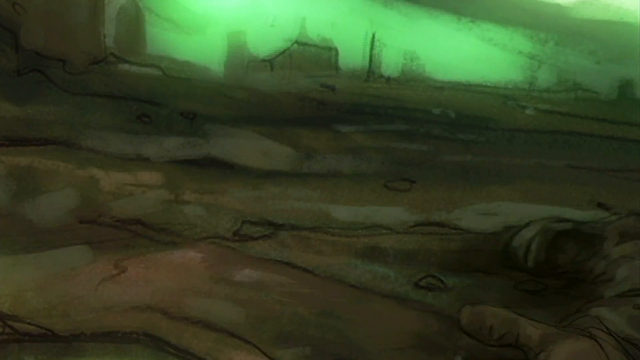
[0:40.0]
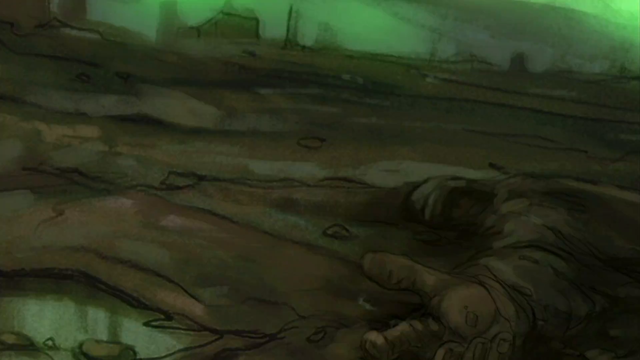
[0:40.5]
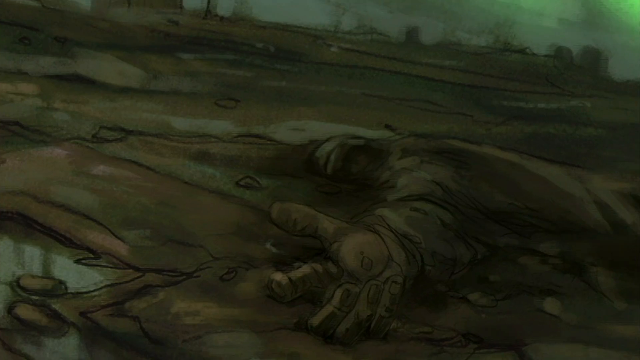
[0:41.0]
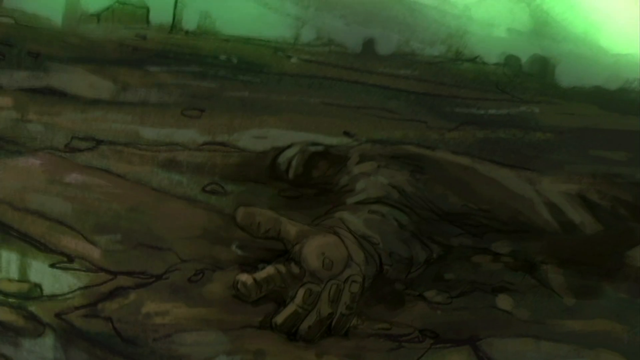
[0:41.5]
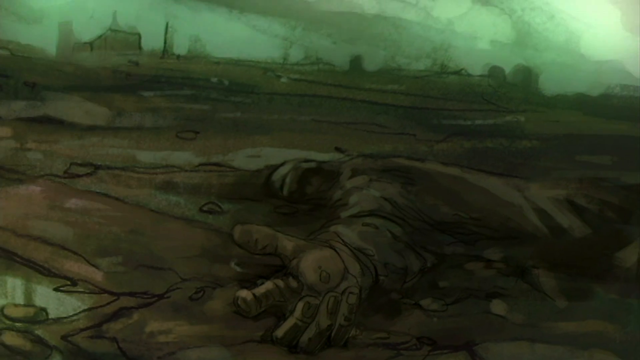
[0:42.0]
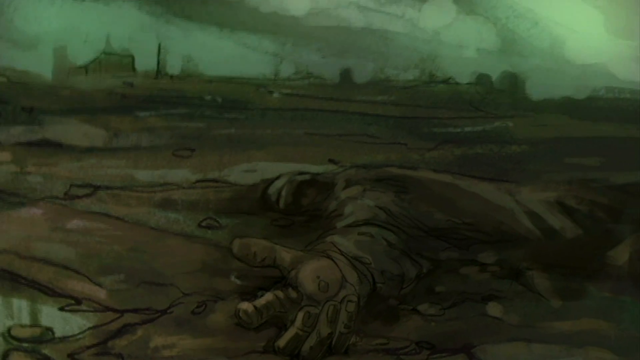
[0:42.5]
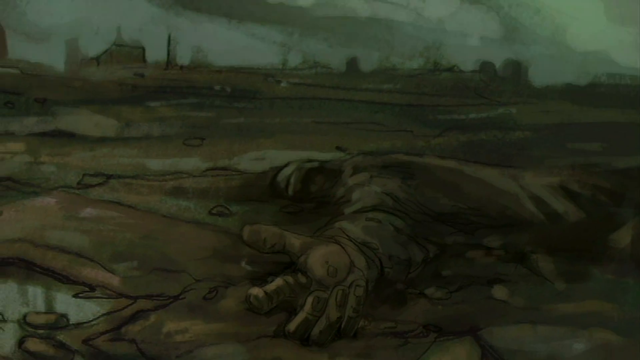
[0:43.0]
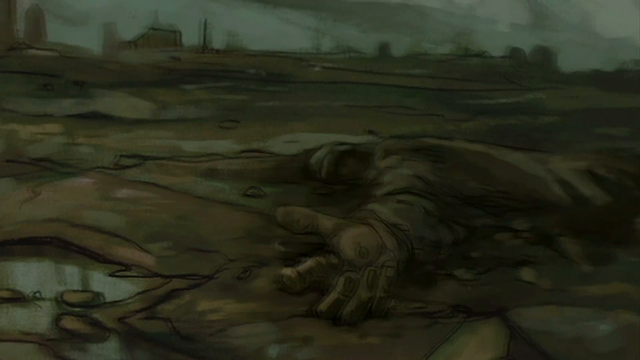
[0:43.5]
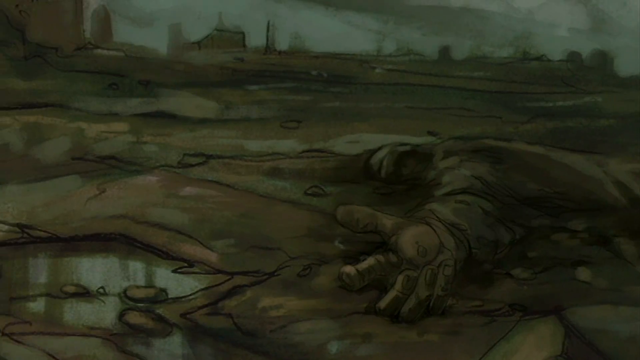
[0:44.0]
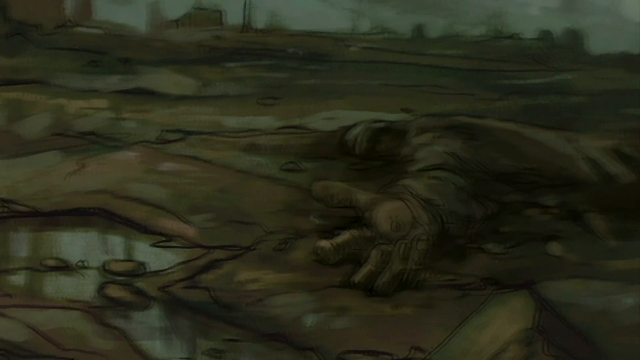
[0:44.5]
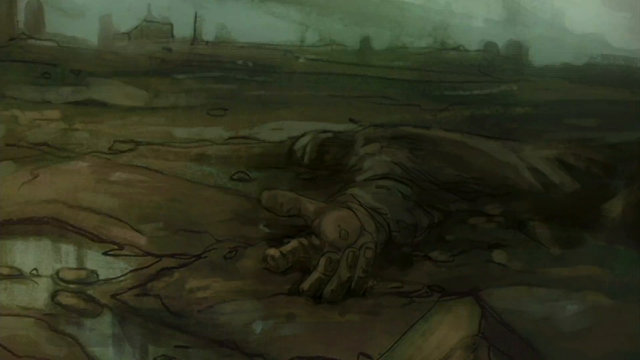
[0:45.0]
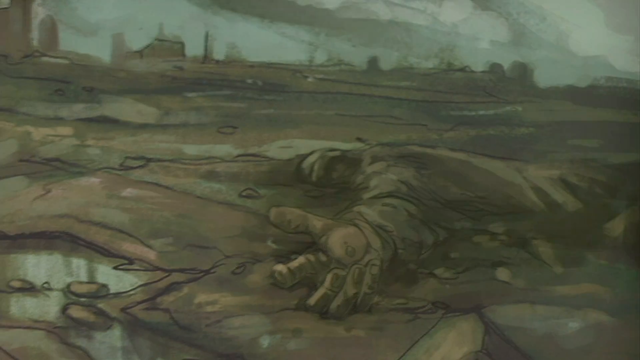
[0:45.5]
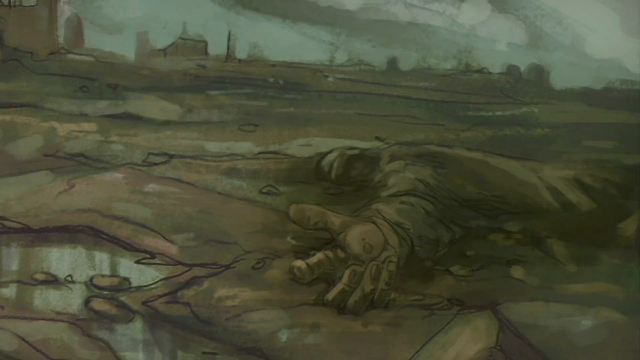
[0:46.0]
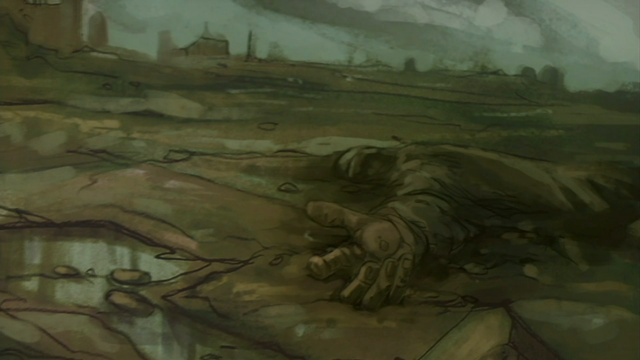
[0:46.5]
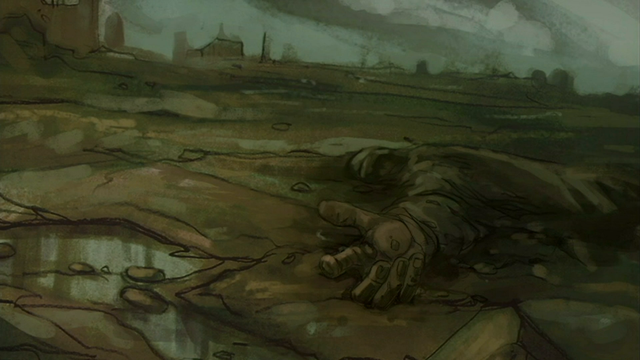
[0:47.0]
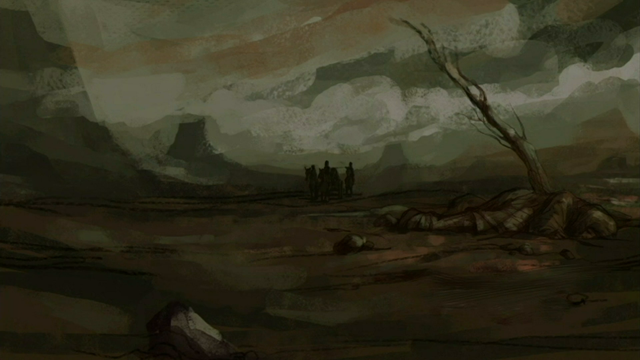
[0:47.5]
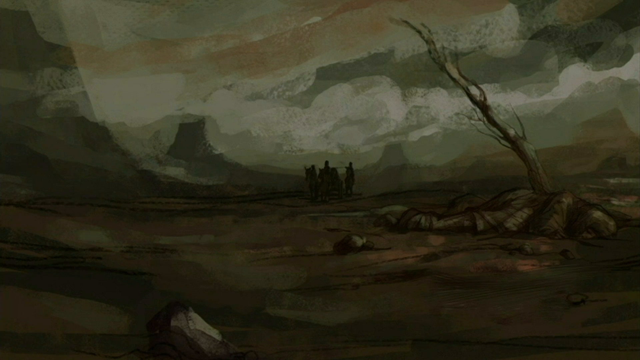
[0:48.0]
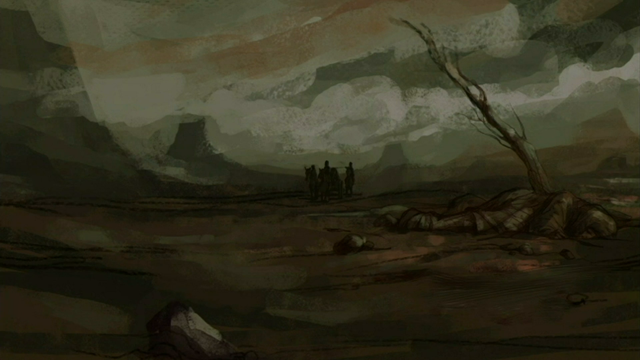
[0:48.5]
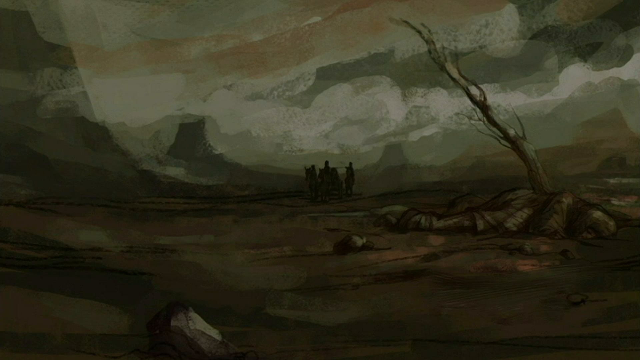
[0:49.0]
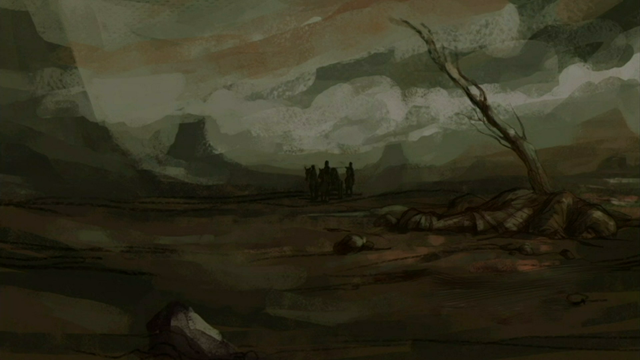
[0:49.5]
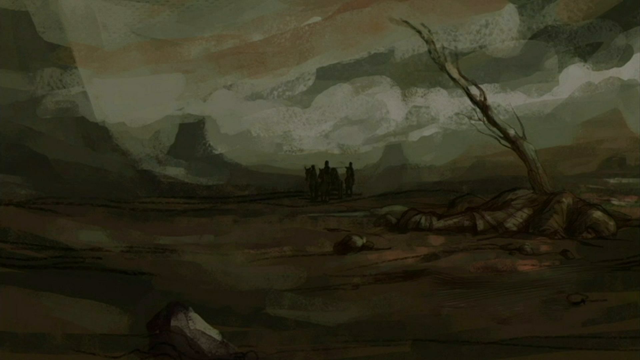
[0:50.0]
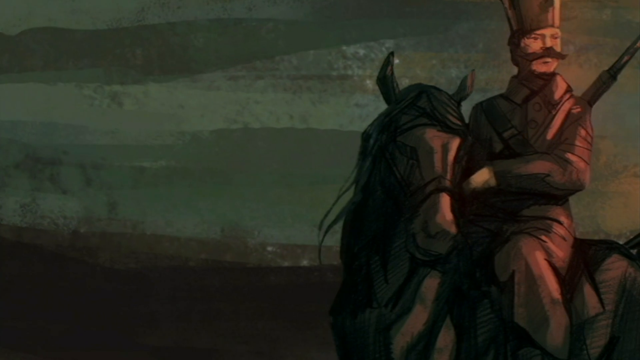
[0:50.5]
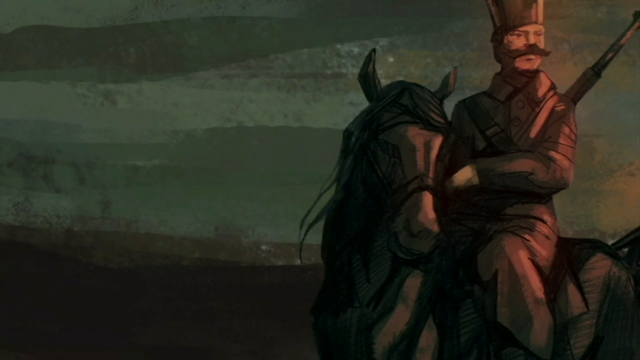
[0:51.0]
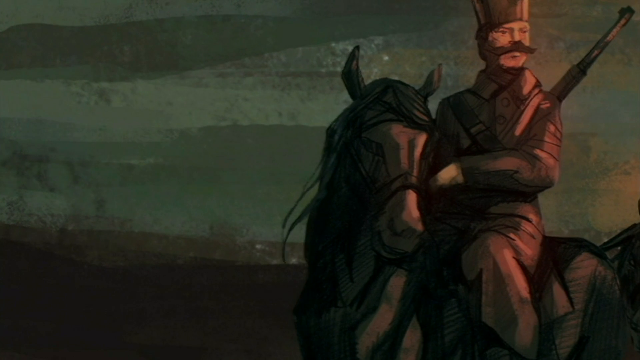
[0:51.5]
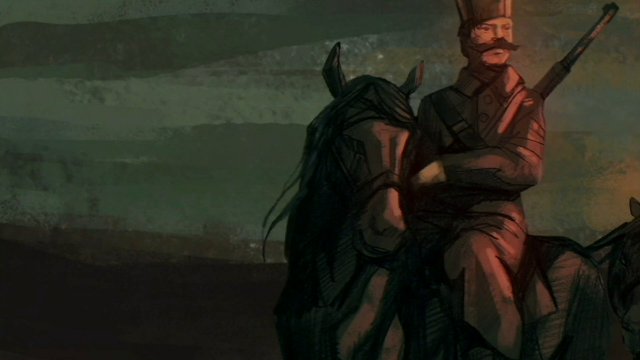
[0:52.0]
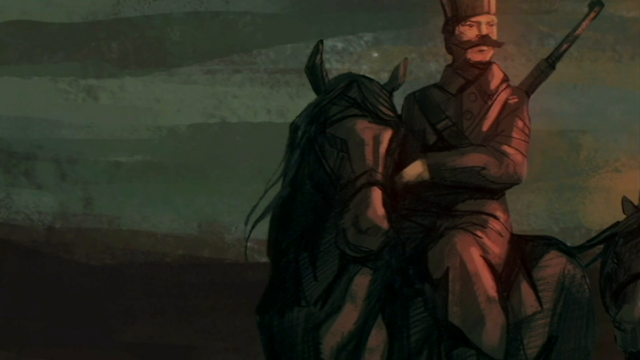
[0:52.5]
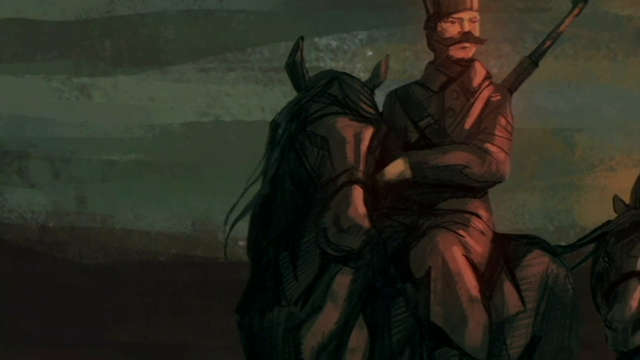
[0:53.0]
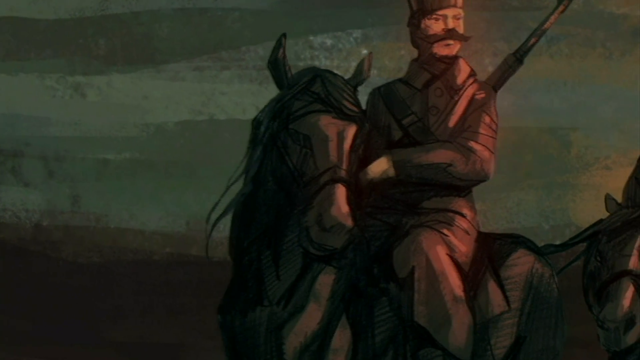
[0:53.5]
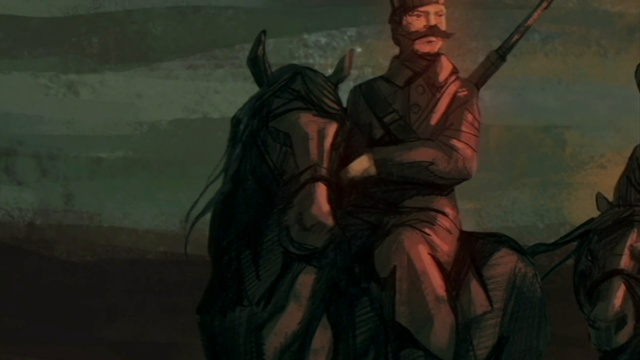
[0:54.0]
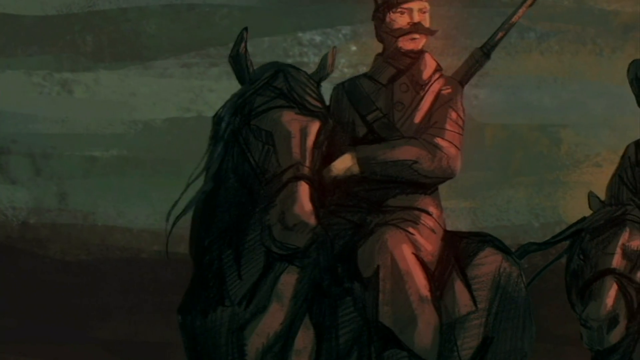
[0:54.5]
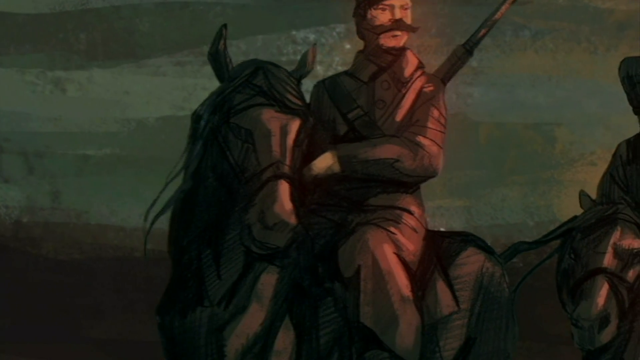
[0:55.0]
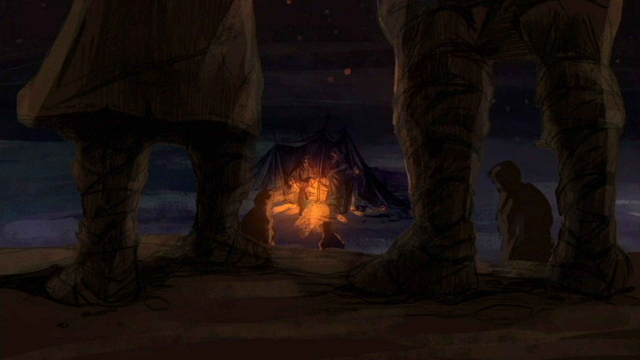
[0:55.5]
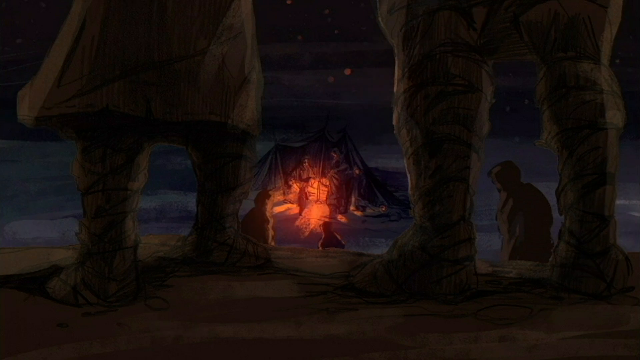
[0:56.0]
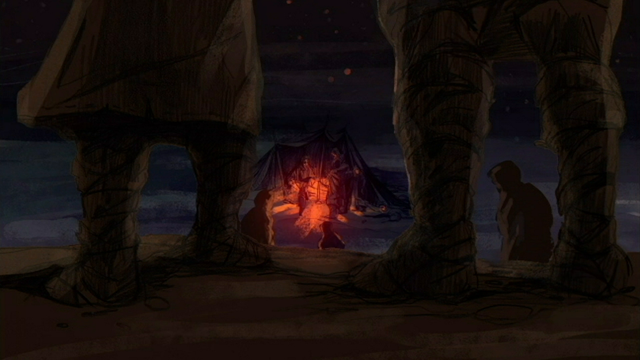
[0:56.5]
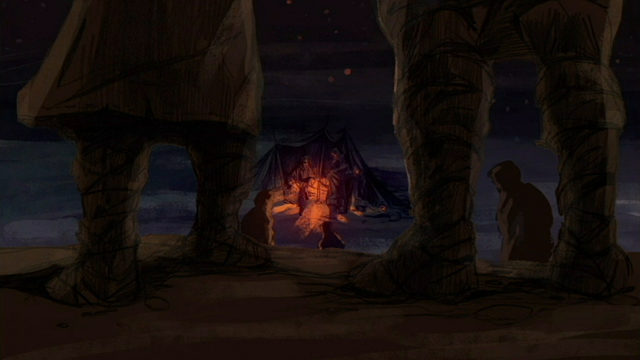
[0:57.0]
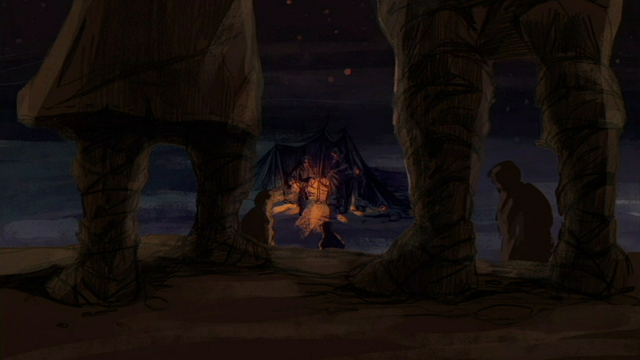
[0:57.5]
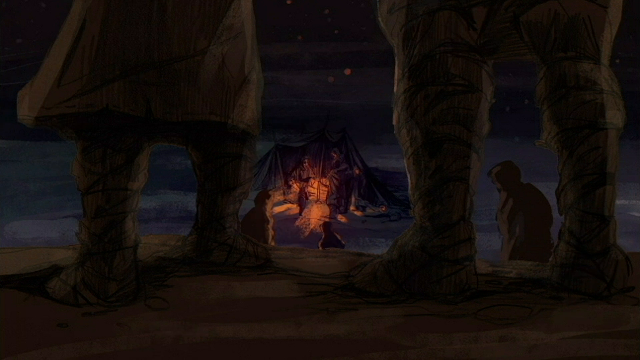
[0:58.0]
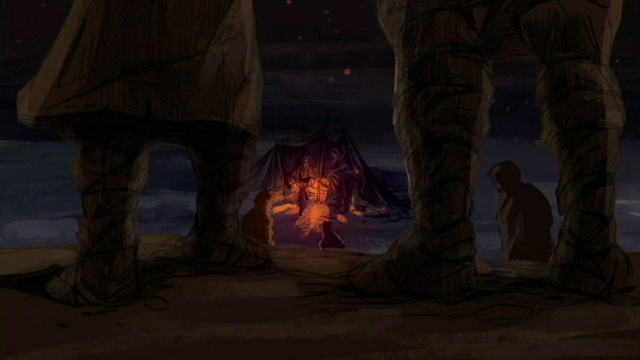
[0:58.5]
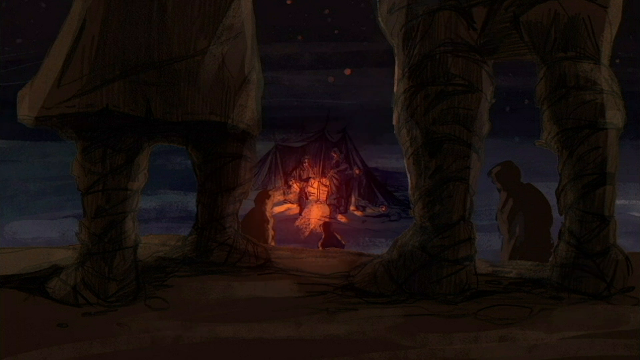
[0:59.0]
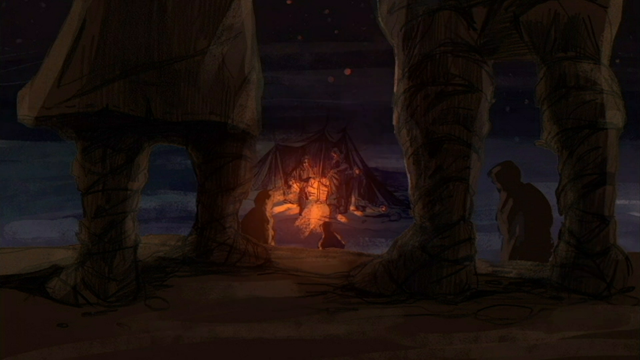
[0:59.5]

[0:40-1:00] The sky at the top turns an eerie-looking green as the view pans up to the left, then pans back down to the body lying on the ground and levels out. The green spreads across the screen as the view backs out a little, moves left a little, moves right a little, and moves around. Then there is just ground, with apparently the outline of a person on the right side. It is very dark. There looks to be a big branch growing out of it, going up to the left, and in the distance there may be some people, shadowy figures. The image looks like it is drawn with charcoal or something similar. Next there is a horse head facing the camera, and on its back is a soldier with a gun strapped over his back, the gun pointing up to the right. He has a mustache and is looking back over his right shoulder. The view pans left a little, and another horse head starts to come in. Then there is a fire in the center with about four people around it, and two people standing on the hill close to the camera, their lower legs visible; between the man's legs on the right side, a person is visible standing there.